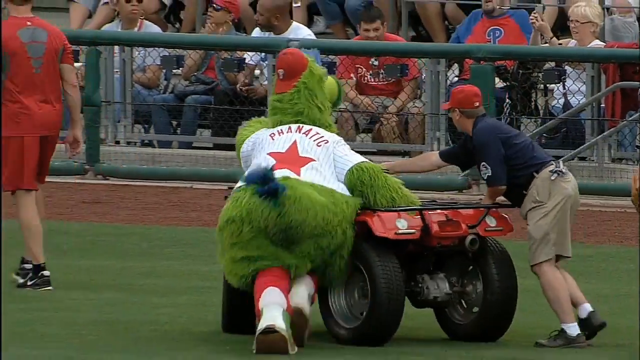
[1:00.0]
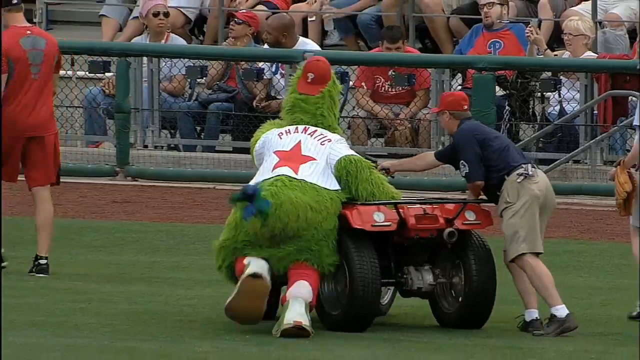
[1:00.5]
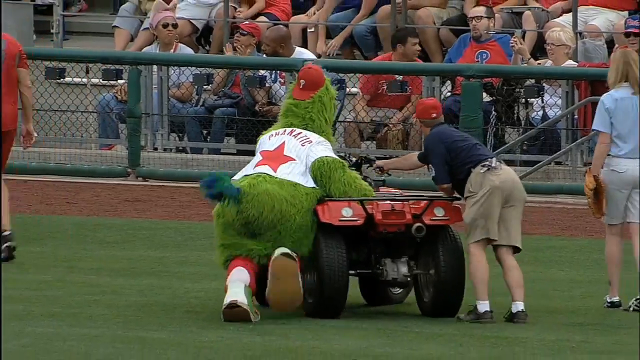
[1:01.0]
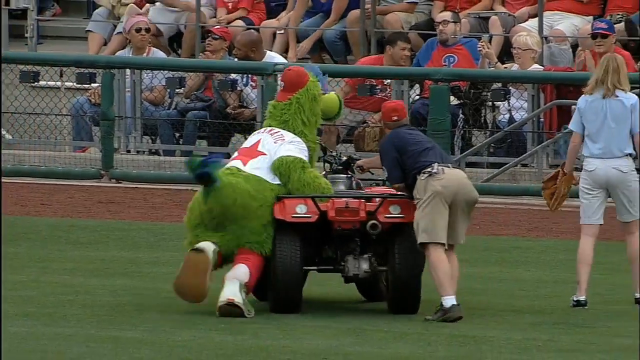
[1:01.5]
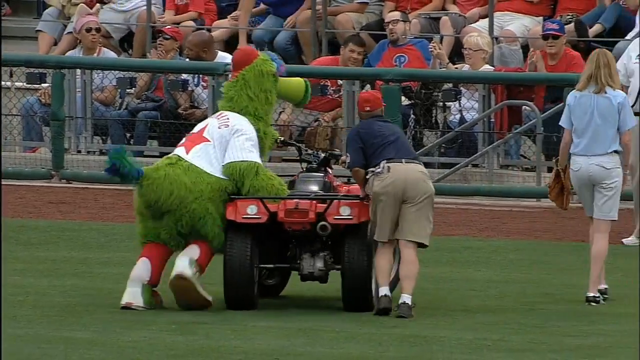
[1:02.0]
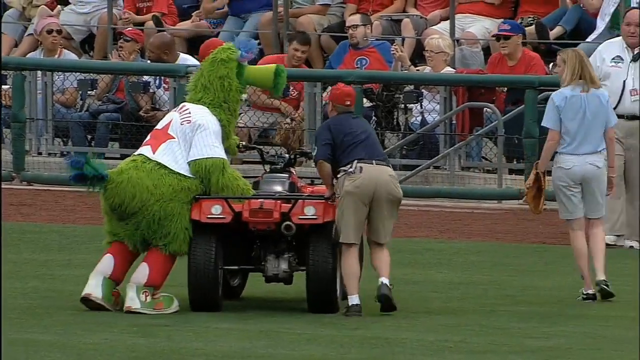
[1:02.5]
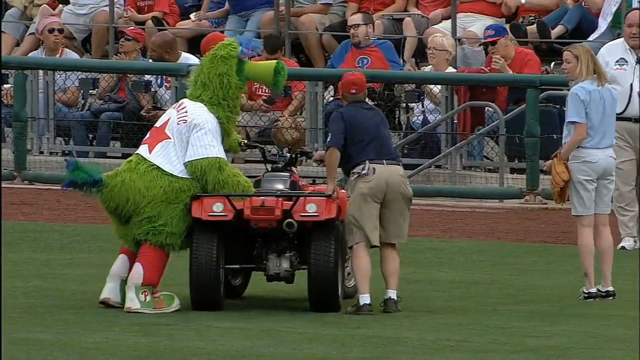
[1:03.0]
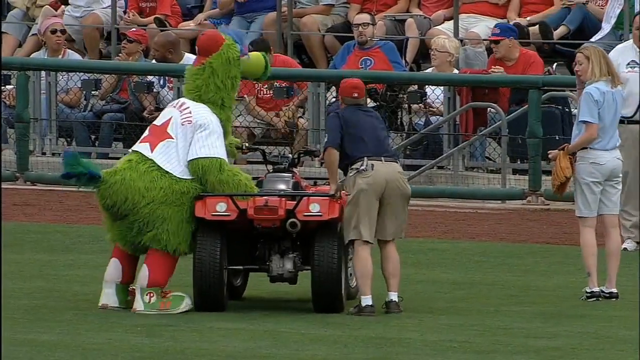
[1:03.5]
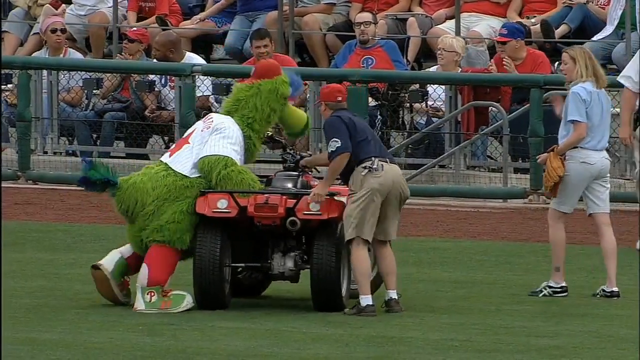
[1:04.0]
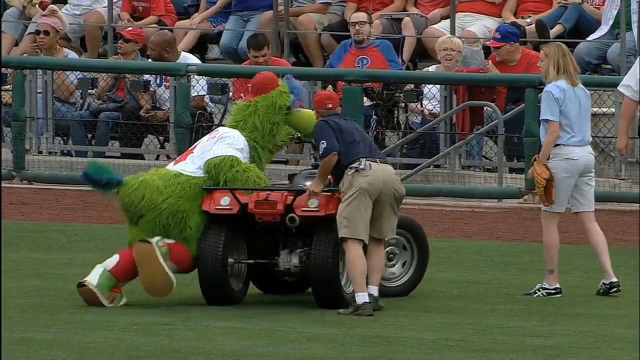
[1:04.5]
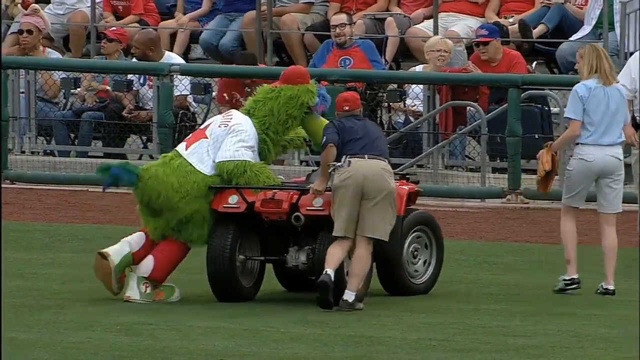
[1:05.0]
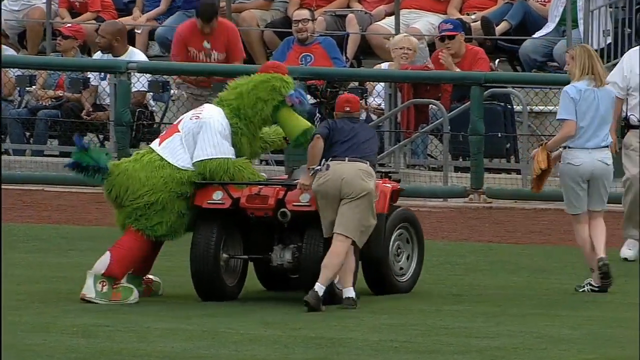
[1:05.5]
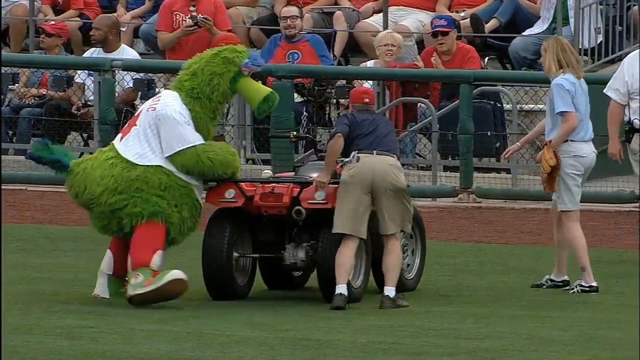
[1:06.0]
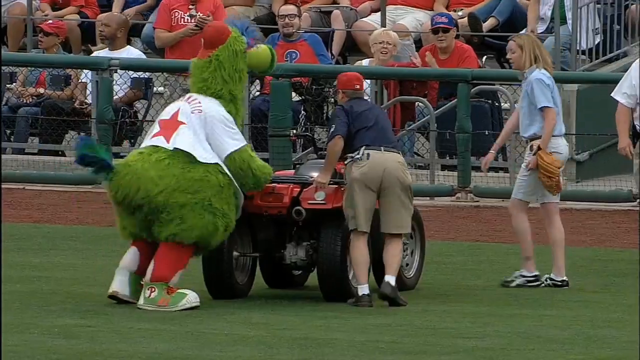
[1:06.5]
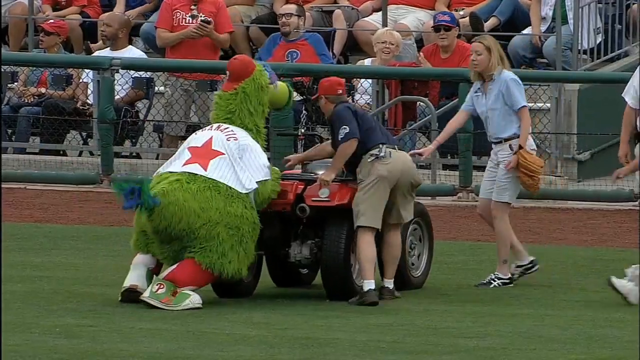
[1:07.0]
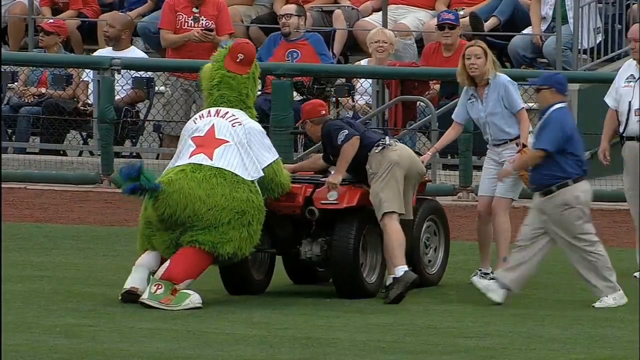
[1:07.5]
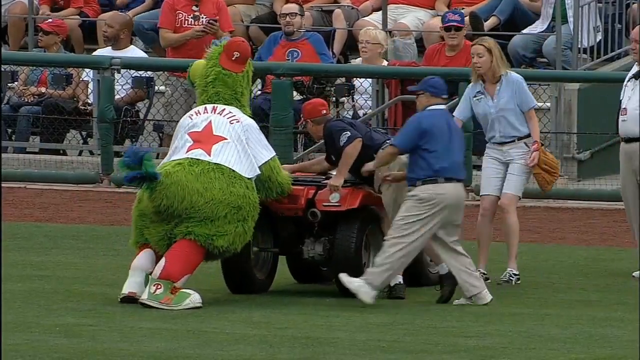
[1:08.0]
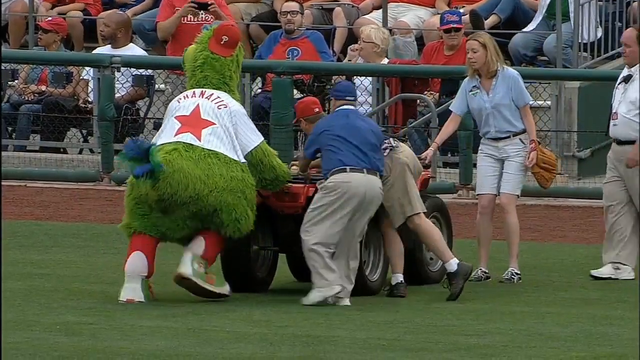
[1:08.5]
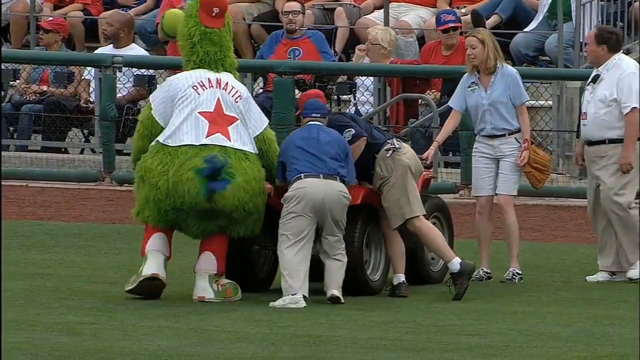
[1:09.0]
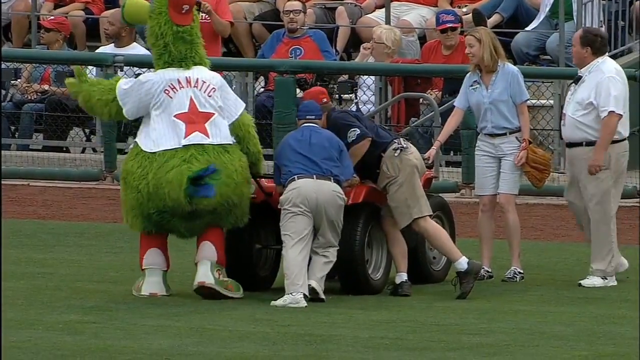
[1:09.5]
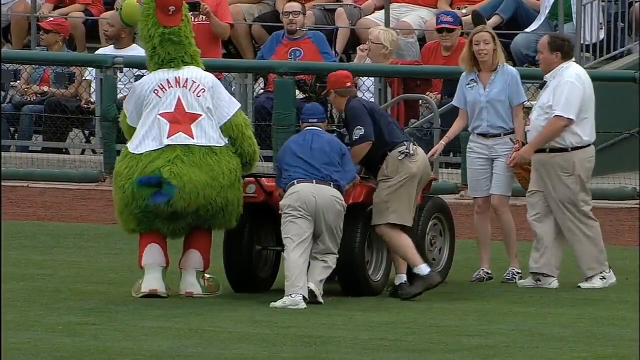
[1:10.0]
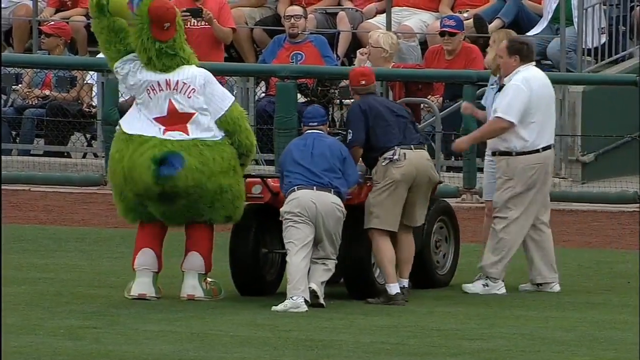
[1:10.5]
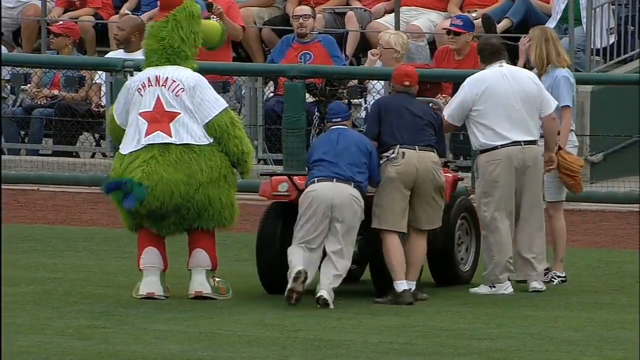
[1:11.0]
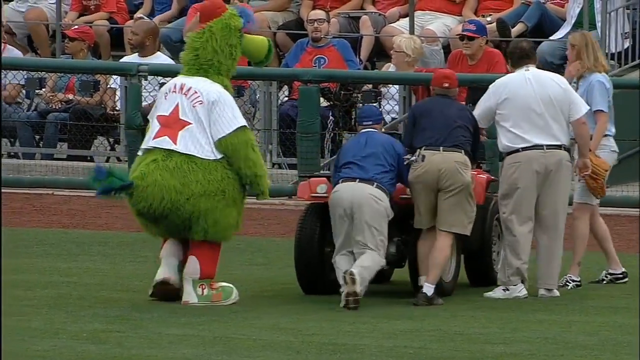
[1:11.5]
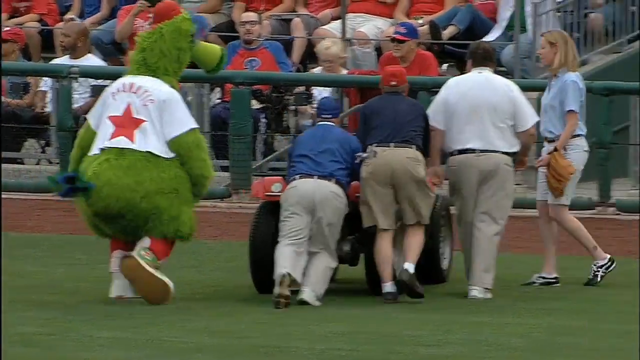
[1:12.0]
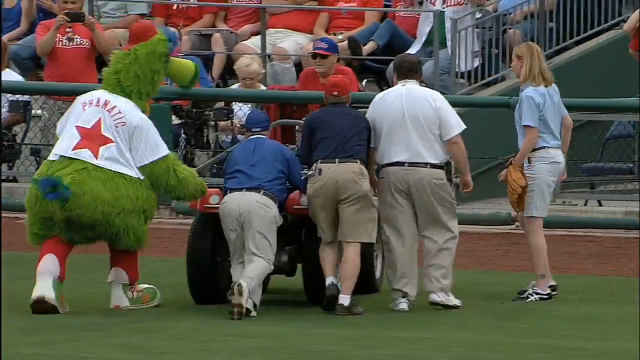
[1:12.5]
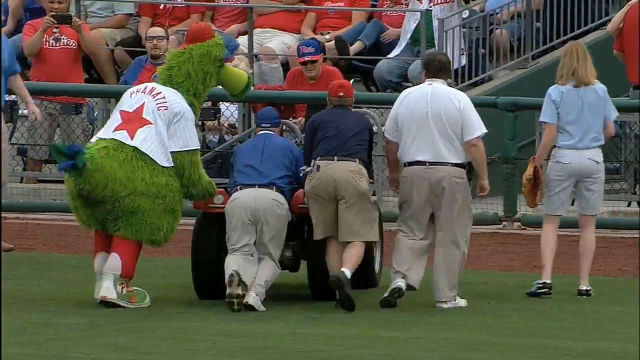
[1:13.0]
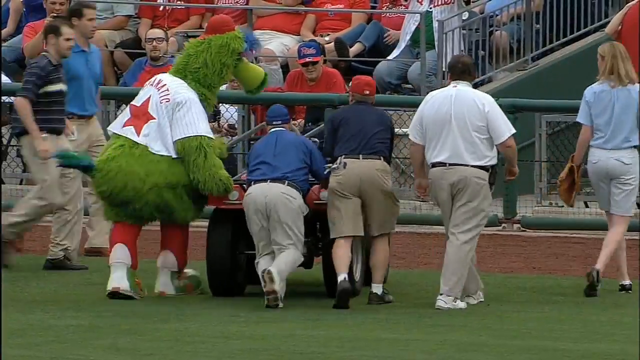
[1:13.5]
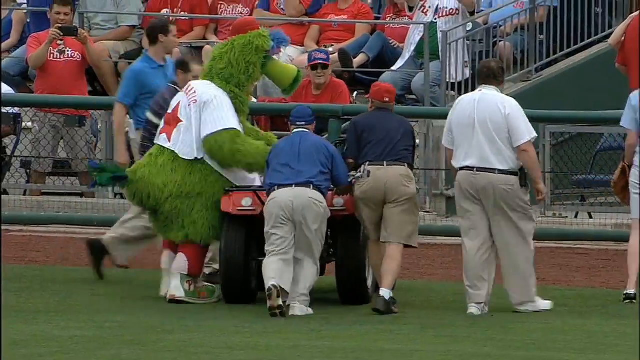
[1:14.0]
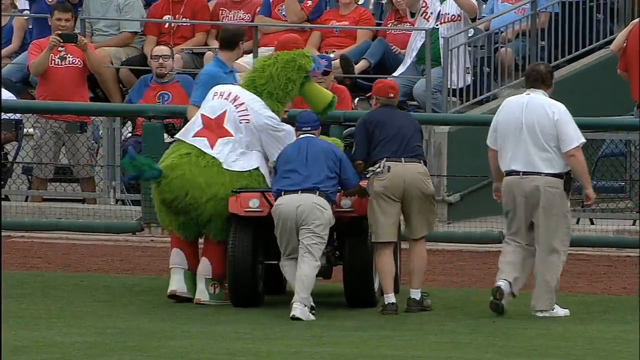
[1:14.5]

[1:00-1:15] The mascot, Fanatic, and a staff member, along with a lady on the field and a couple of other staff members, push the red ATV four-wheeler, which is apparently stuck and will not start. The mascot and about four stadium staff push it: a man with a red hat, another man with a blue hat, and a lady carrying a basketball mitt. They are all wearing shorts, and pushing the heavy vehicle off the field seems really difficult. The battery apparently died.